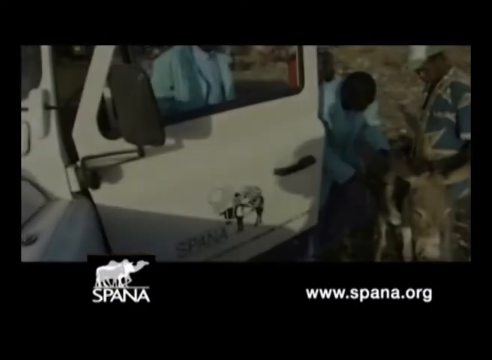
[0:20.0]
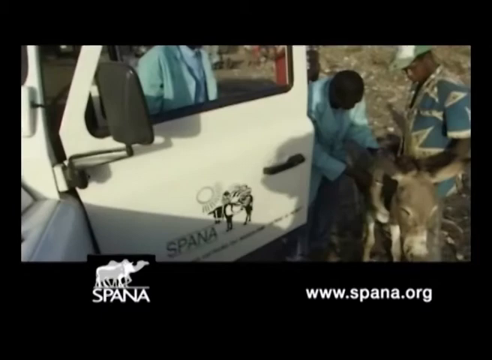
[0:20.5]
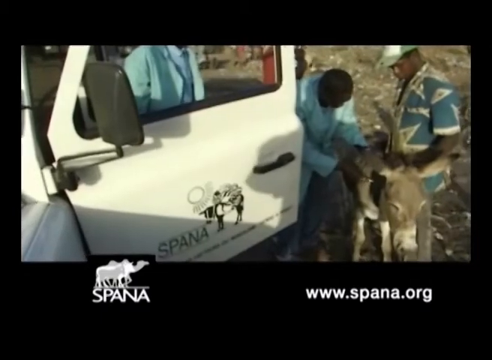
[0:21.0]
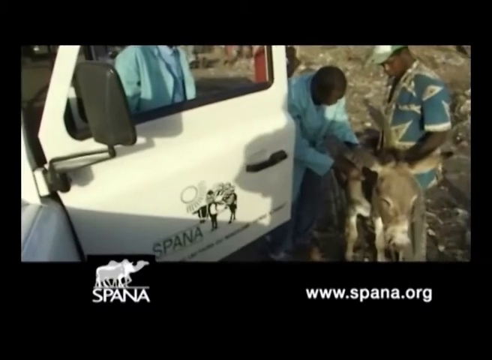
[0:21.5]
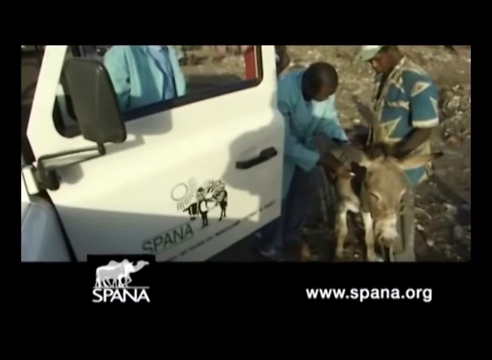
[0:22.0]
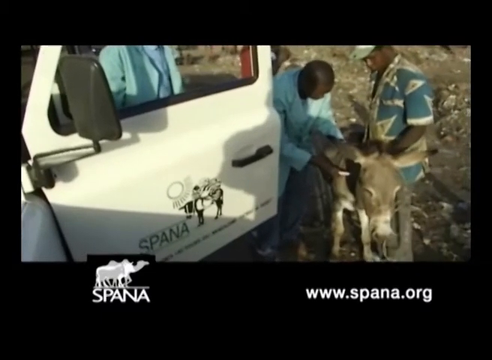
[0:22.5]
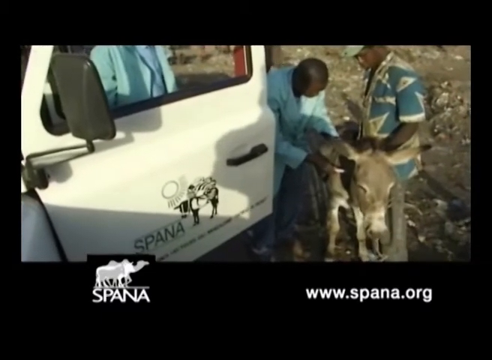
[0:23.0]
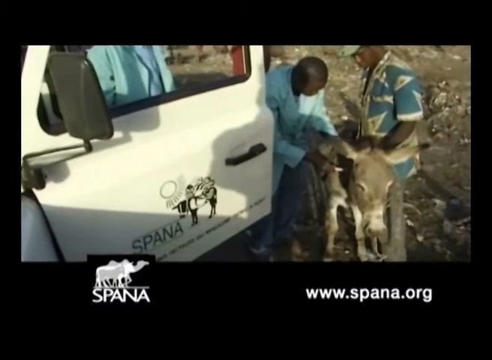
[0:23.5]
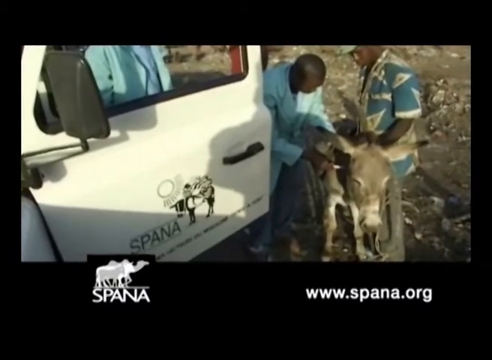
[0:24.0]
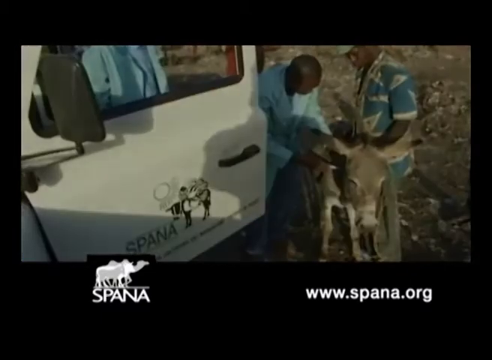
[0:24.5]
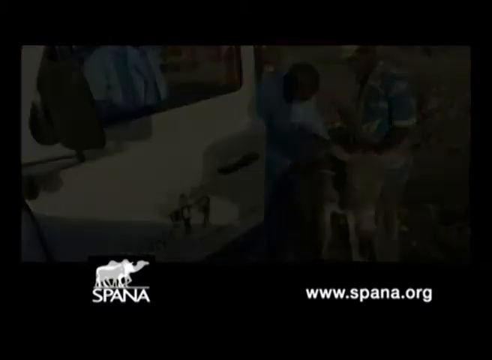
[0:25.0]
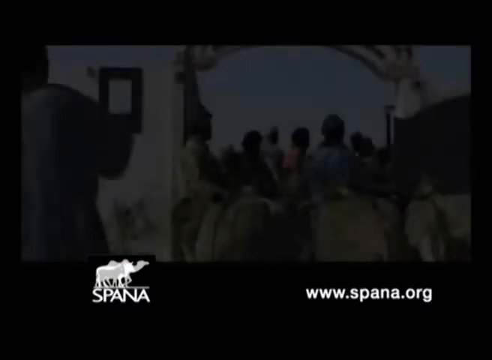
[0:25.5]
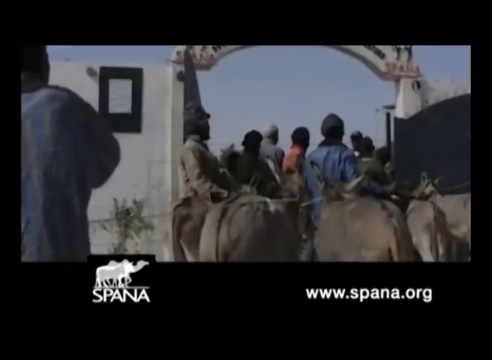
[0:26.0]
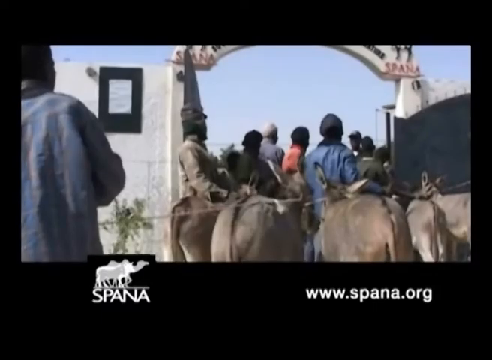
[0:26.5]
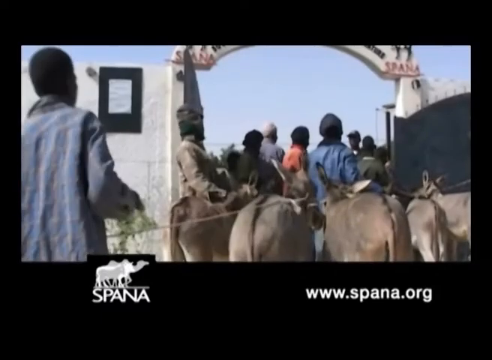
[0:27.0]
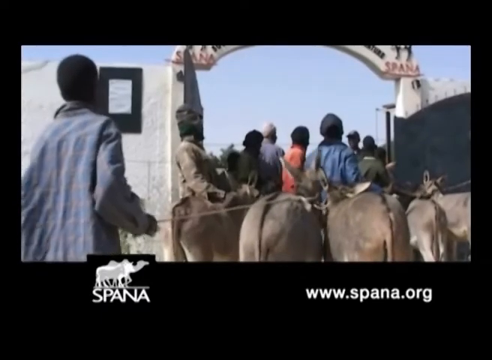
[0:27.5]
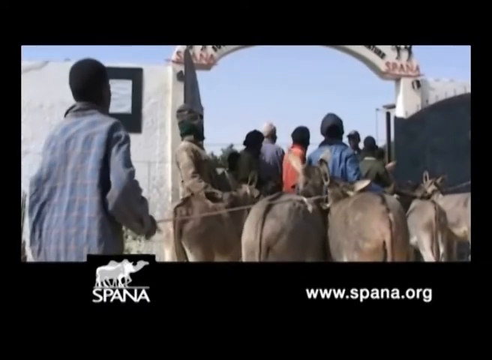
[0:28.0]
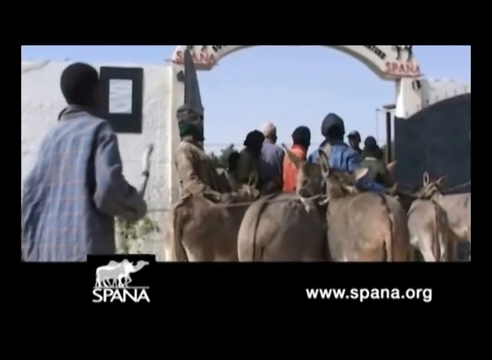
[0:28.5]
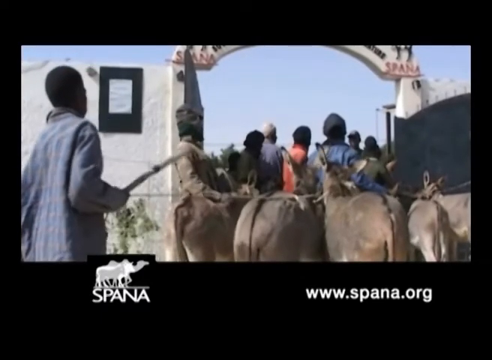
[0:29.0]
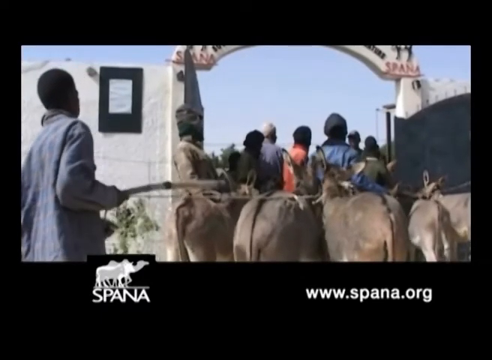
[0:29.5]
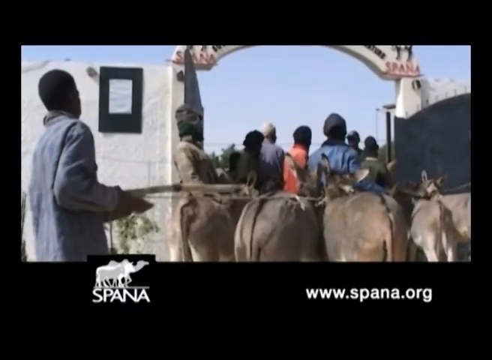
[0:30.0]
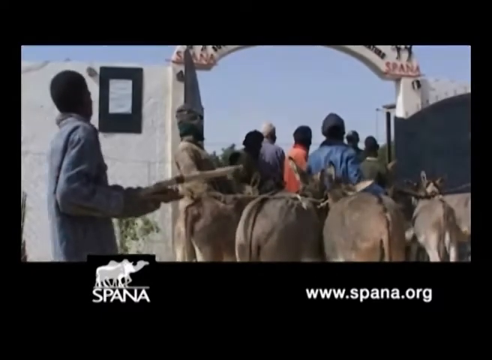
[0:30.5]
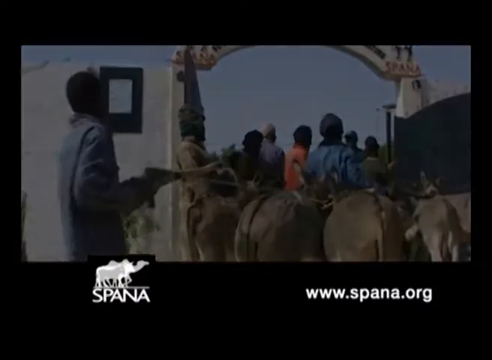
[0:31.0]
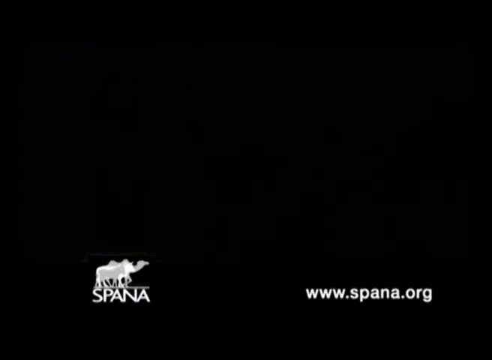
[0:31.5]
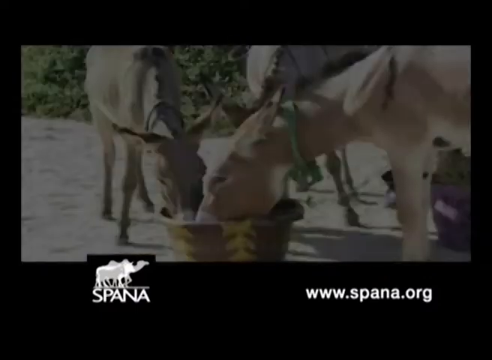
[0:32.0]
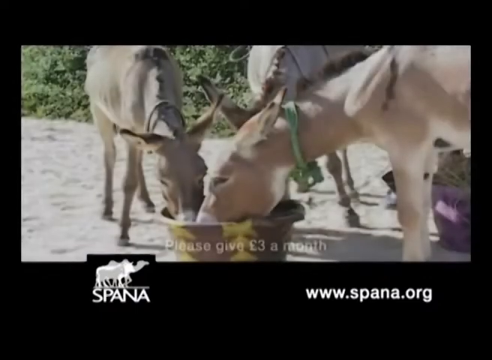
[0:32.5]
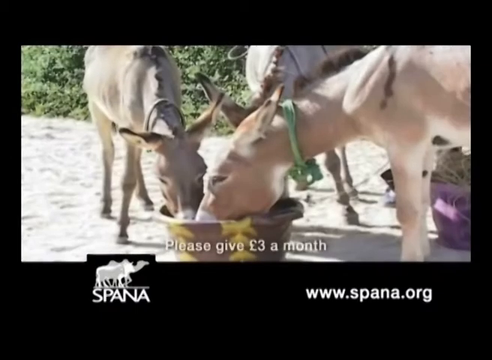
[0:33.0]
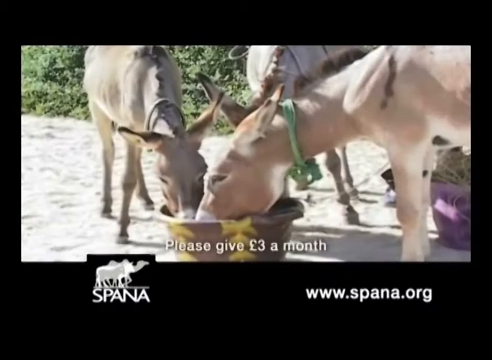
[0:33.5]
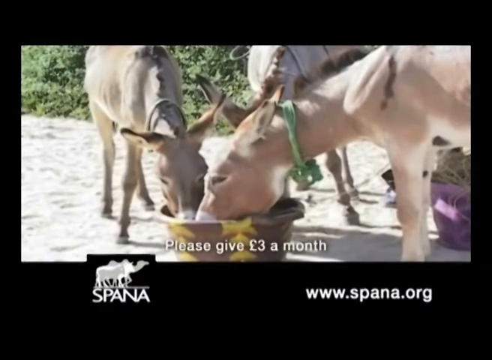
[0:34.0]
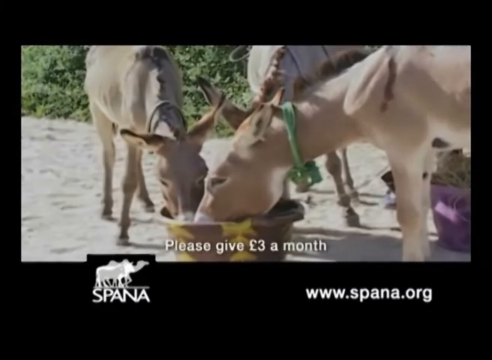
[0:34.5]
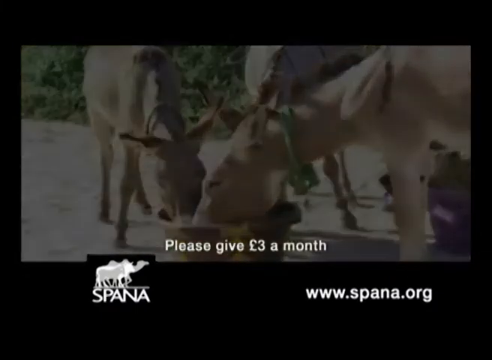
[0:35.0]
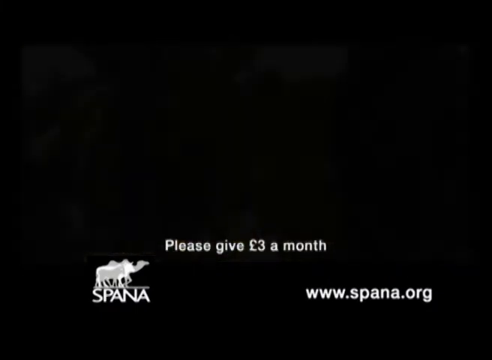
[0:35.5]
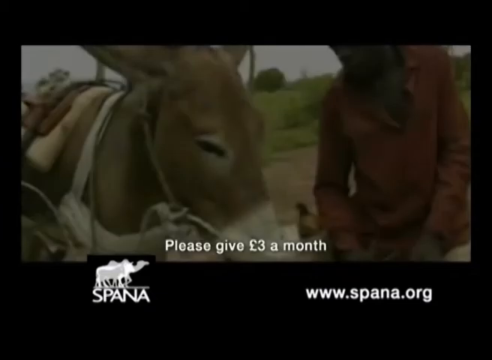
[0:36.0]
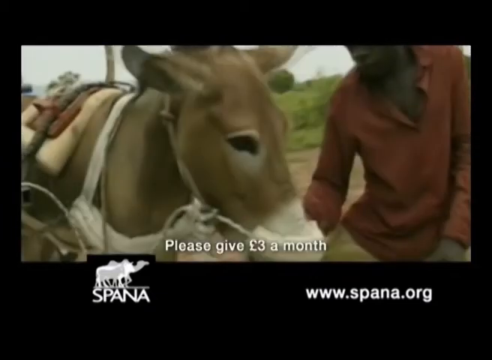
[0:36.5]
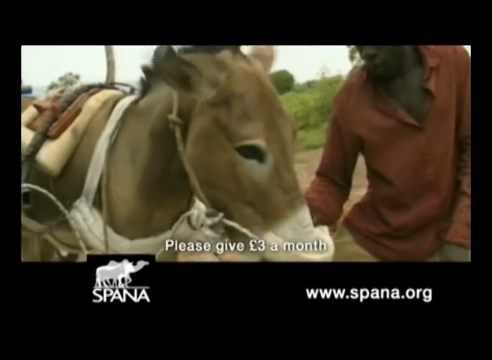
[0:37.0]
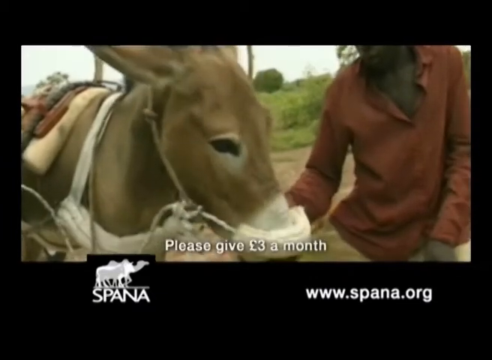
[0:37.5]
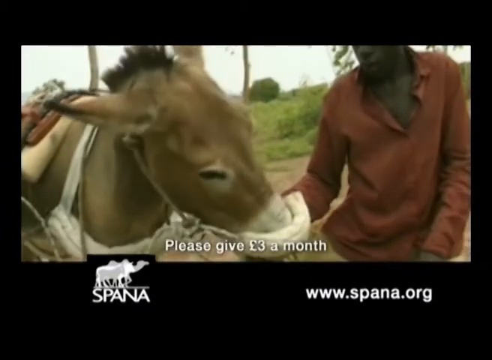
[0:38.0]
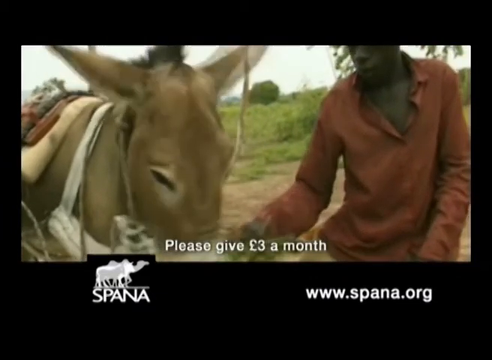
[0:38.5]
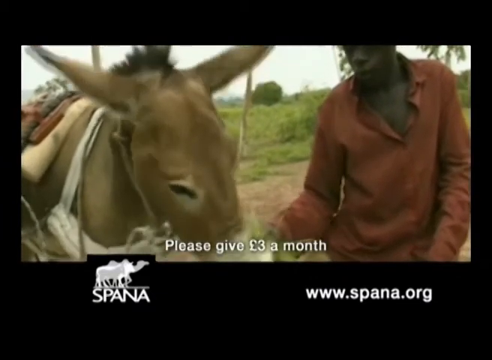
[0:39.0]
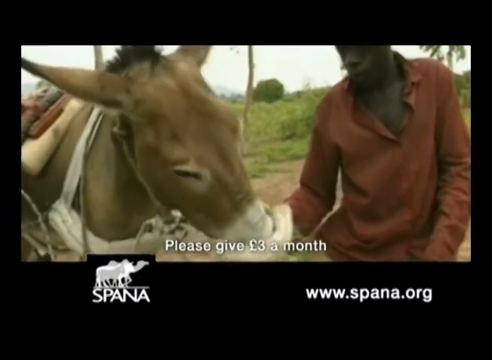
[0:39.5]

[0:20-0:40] A car appears, apparently belonging to people who look after the health of animals and are taking care of the donkey. On-screen text reads "donate £3". The donkeys are seen working very hard.